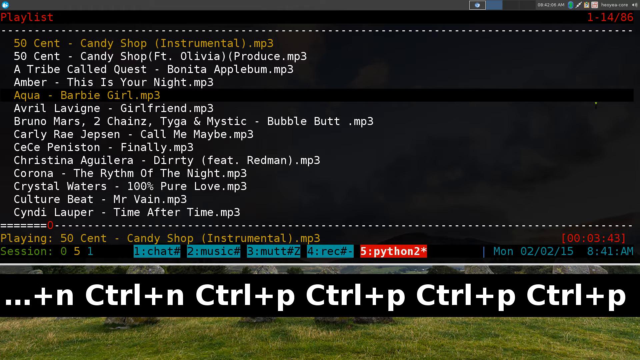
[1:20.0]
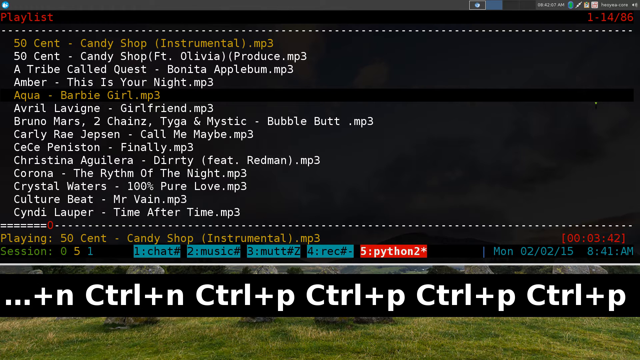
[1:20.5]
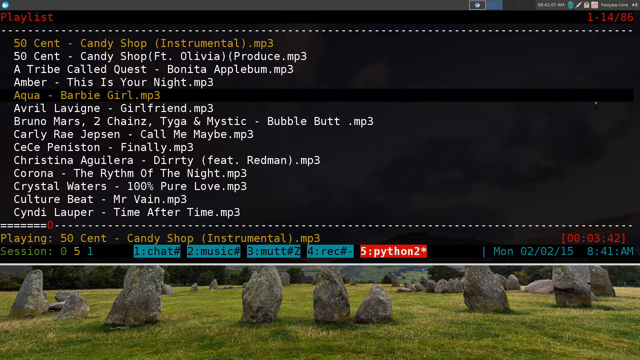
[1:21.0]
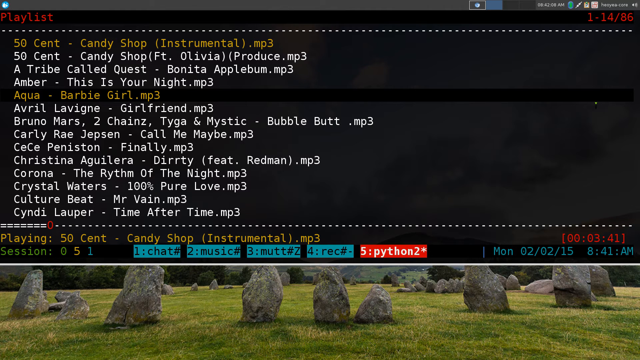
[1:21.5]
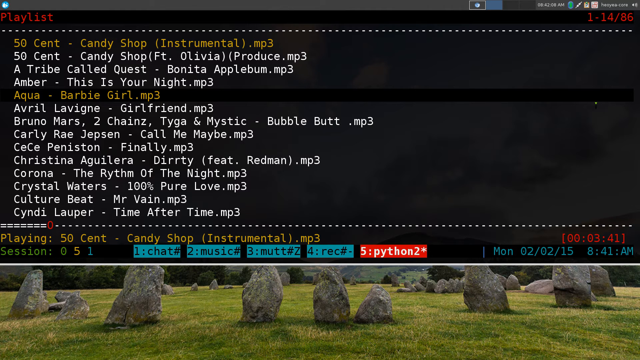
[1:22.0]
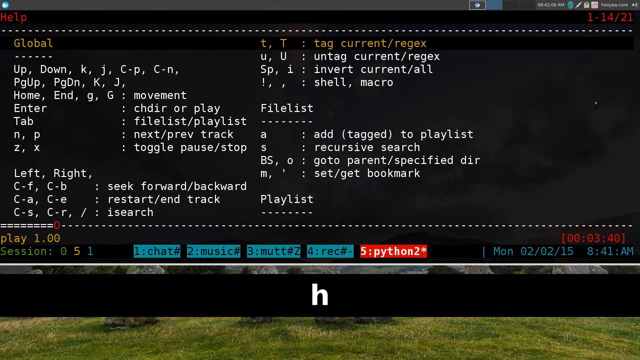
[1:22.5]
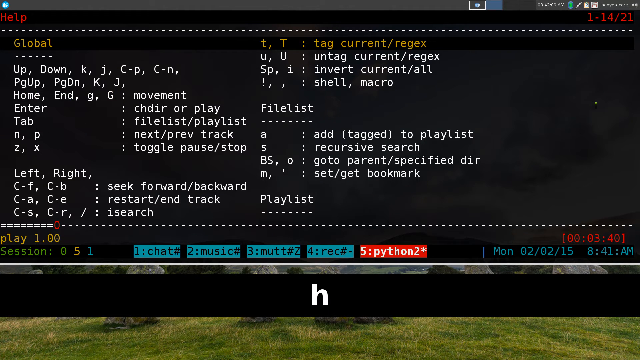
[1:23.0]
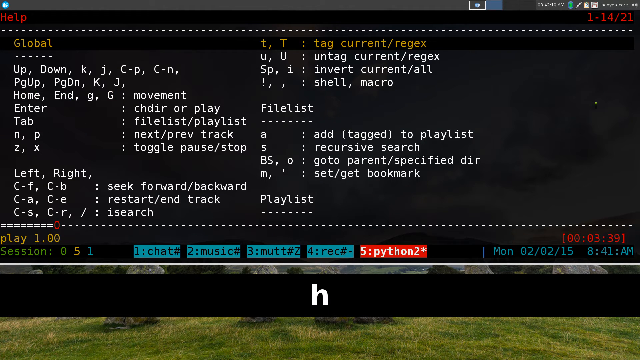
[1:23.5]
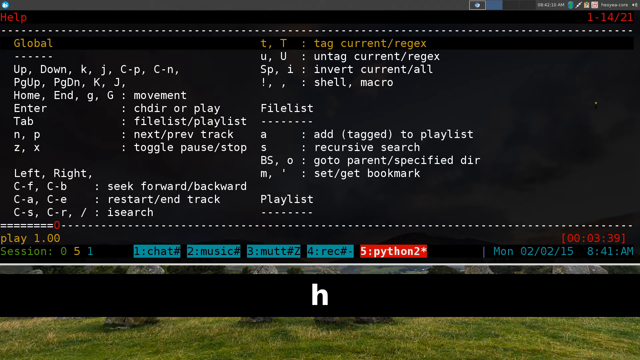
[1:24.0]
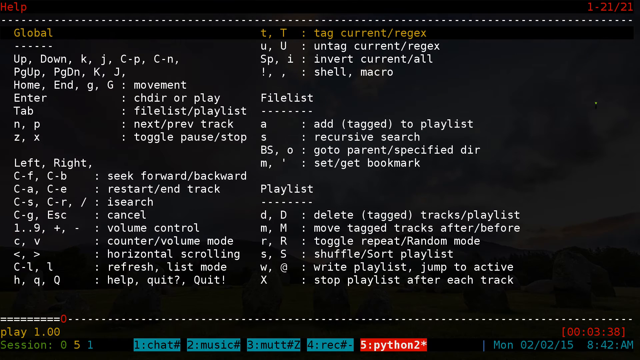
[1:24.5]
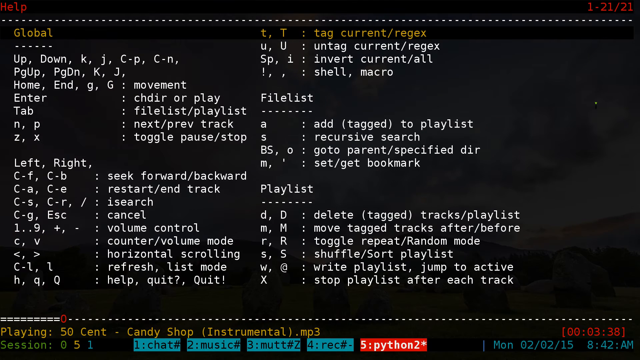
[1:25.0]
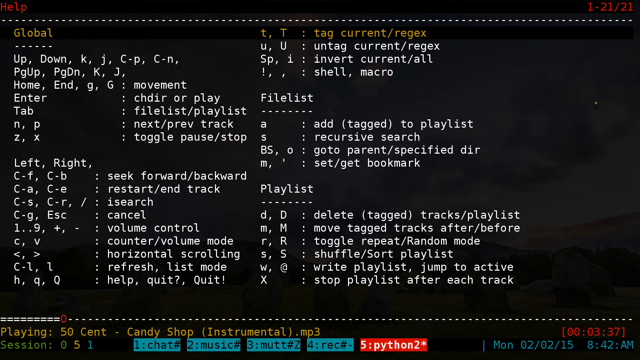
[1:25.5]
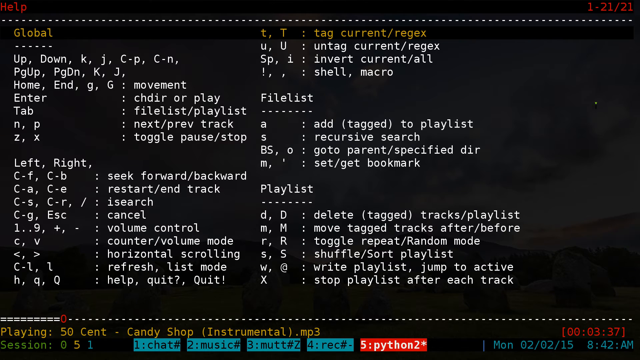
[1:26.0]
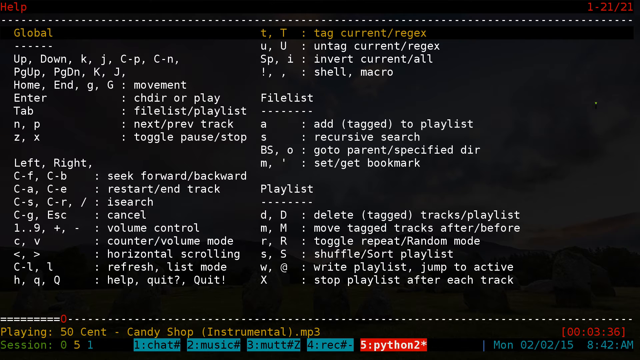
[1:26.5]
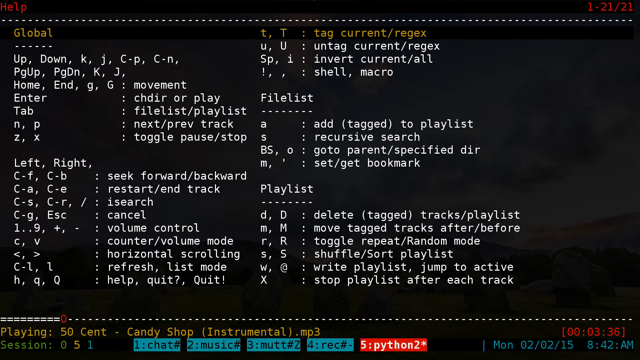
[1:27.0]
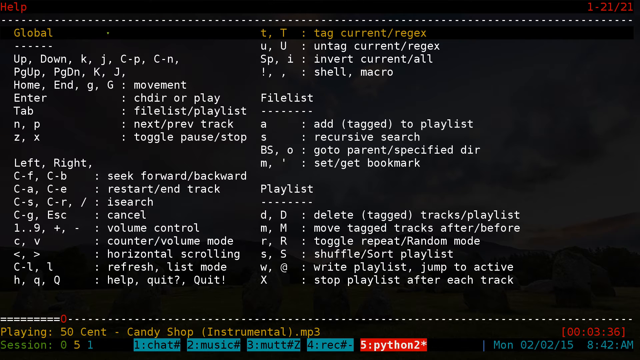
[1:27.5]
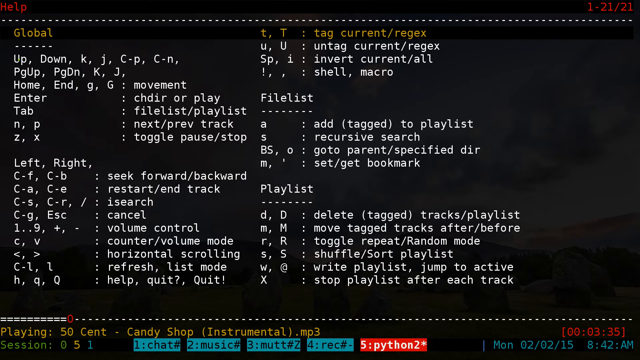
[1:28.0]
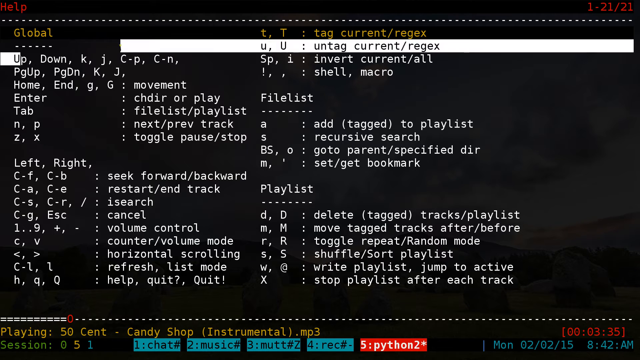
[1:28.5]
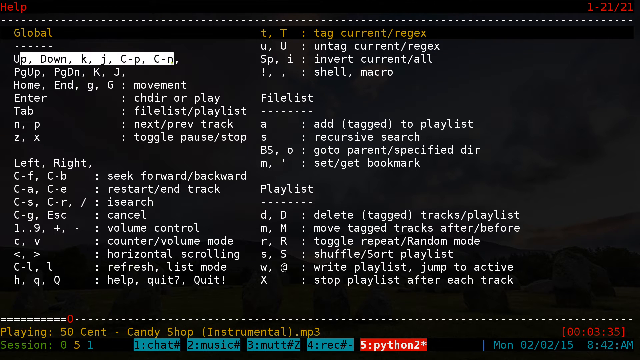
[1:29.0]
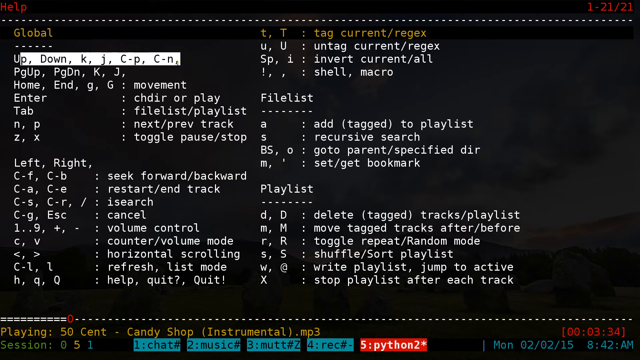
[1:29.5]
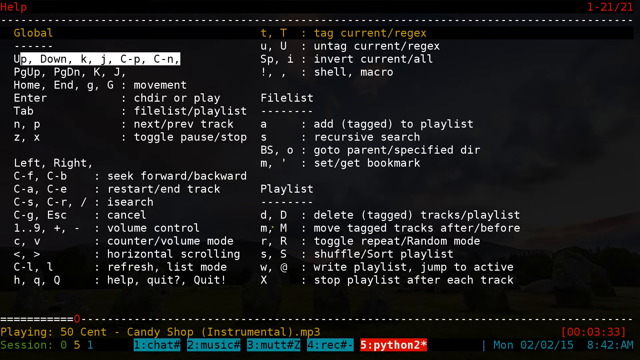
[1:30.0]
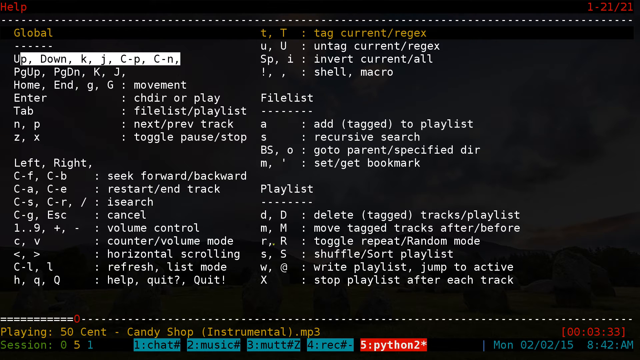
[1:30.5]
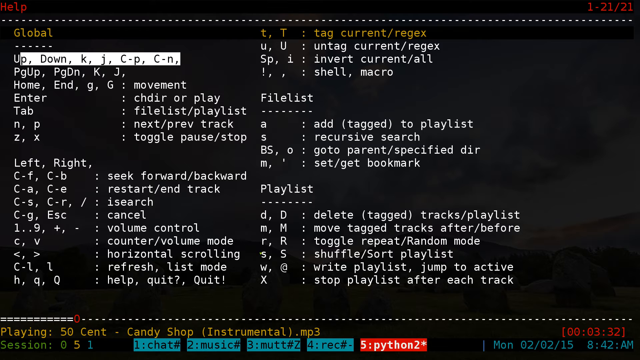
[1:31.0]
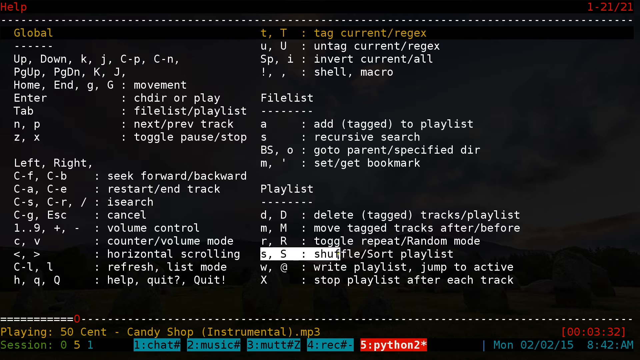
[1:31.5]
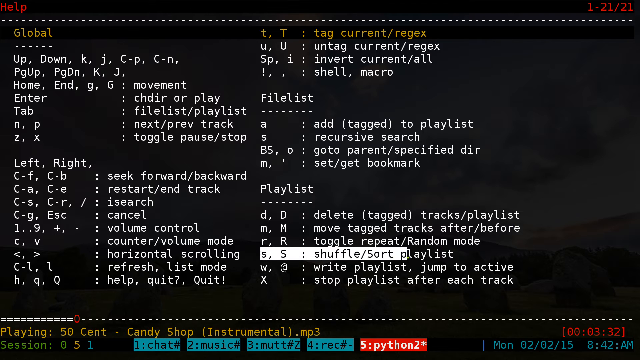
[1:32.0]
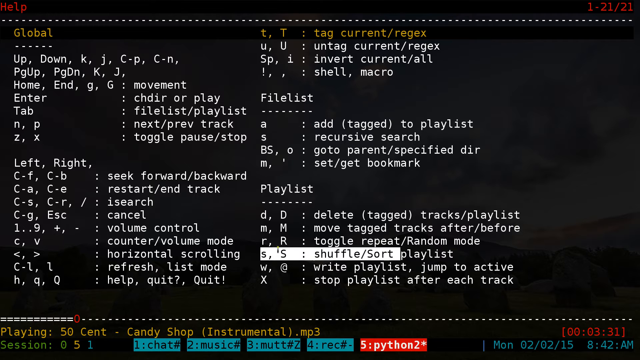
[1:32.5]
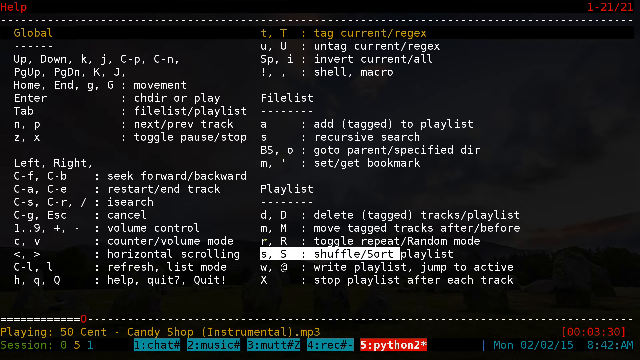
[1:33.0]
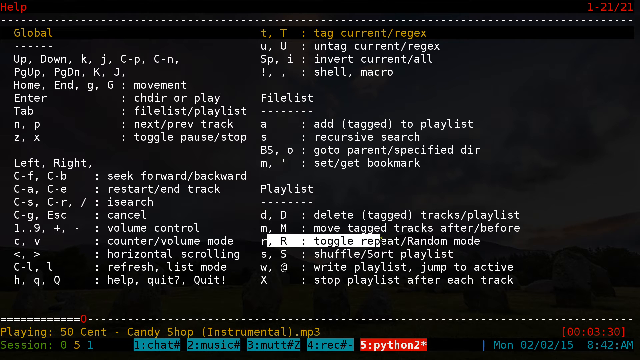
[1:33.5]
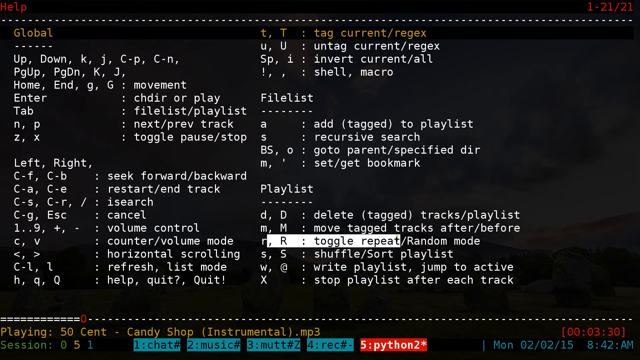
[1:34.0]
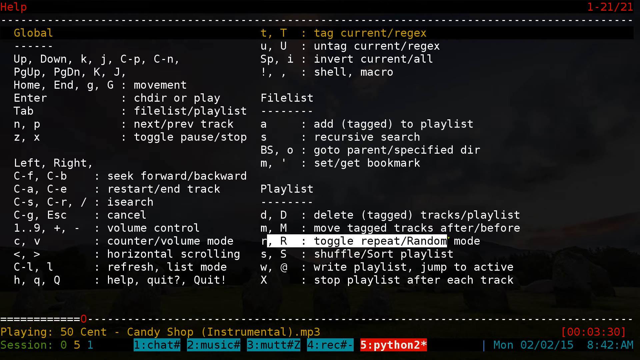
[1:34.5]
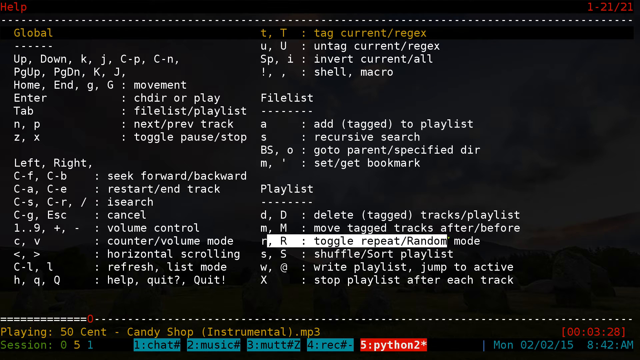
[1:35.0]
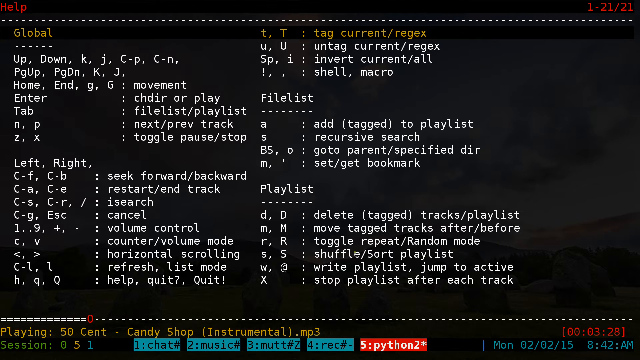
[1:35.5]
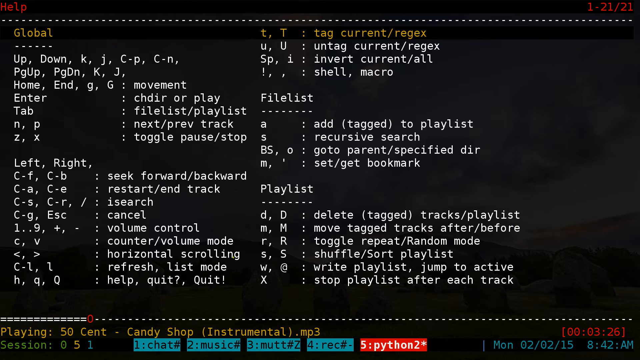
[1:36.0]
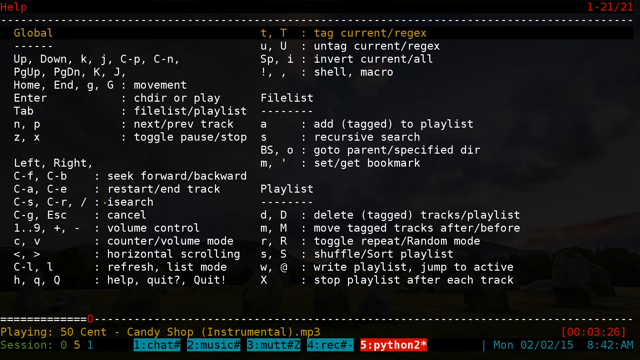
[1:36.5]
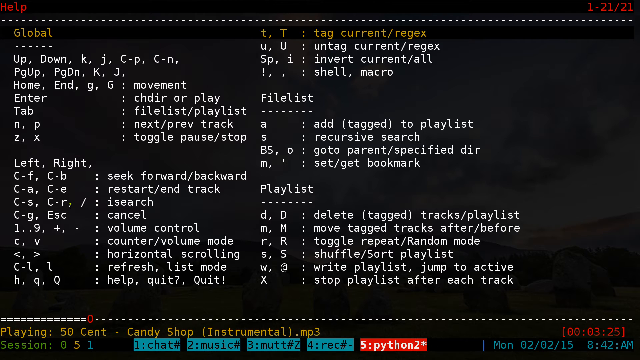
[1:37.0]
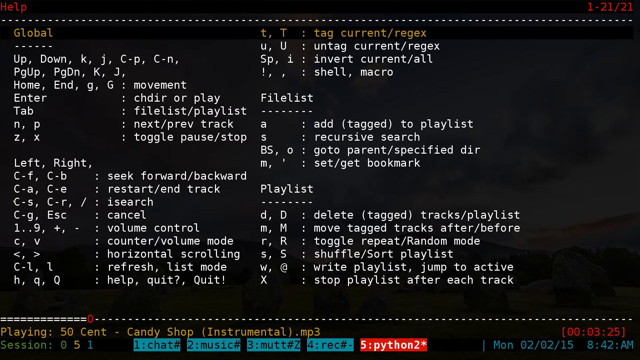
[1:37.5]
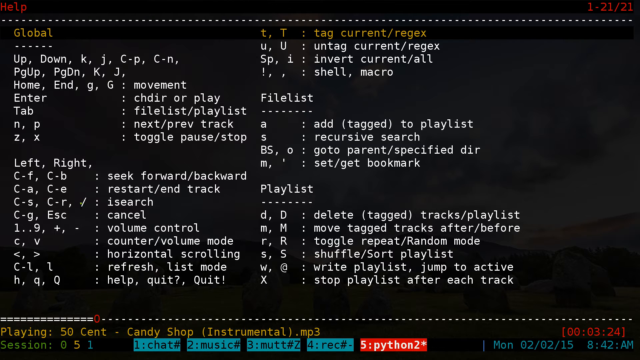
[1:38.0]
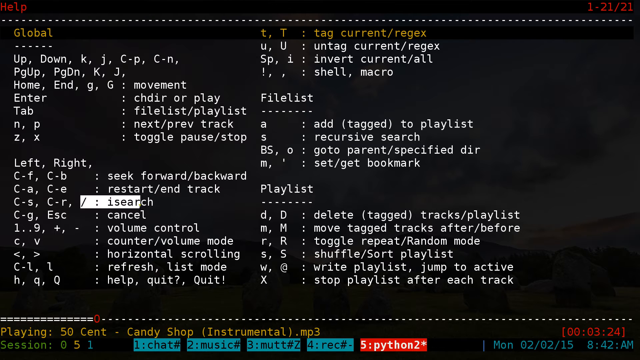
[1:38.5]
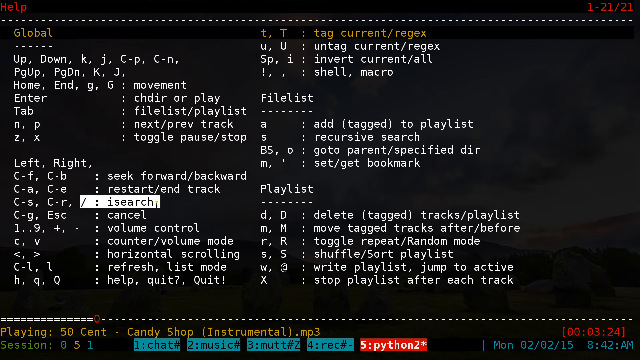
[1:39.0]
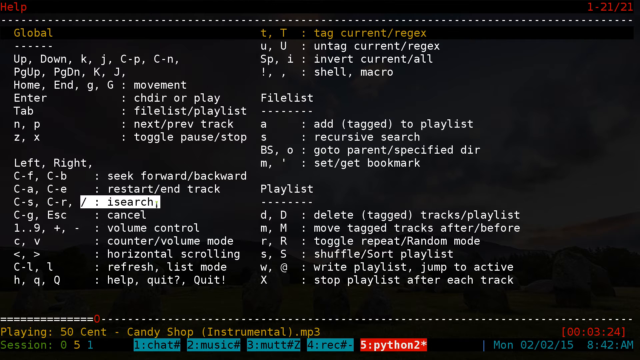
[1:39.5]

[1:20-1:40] After pressing Ctrl-P, the user presses the H key, which opens the Help page of commands. The Help screen is enlarged, showing all 21 commands, grouped from global to filelist to playlist-related command keys. The user highlights specific keys and combinations, such as Up, Down, K, J, Ctrl-P and Ctrl-N, which move up and down the list of songs. In the playlist section, the user highlights the lowercase and uppercase S keys, which control shuffle, or sorting the playlist. Next the user highlights the R, lowercase r and uppercase R keys, which toggle repeat mode or random mode on and off. The user then moves to Ctrl-S and Ctrl-R, which correspond to the isearch command.